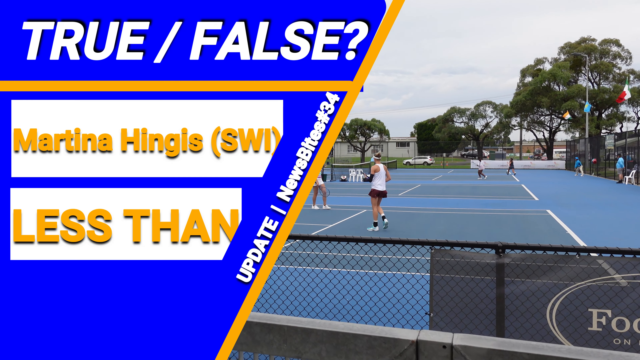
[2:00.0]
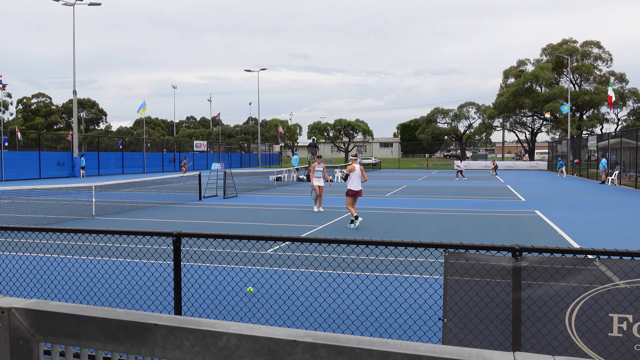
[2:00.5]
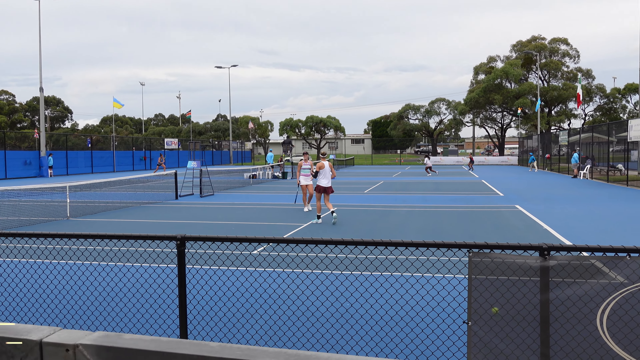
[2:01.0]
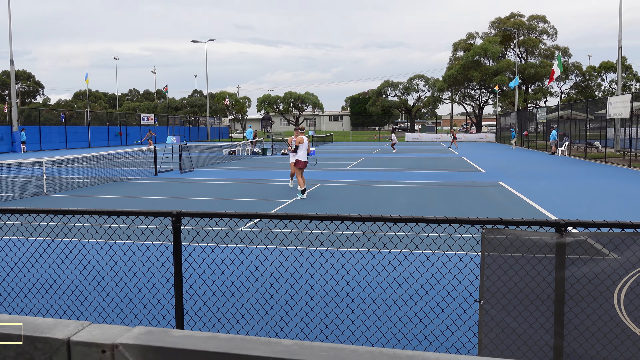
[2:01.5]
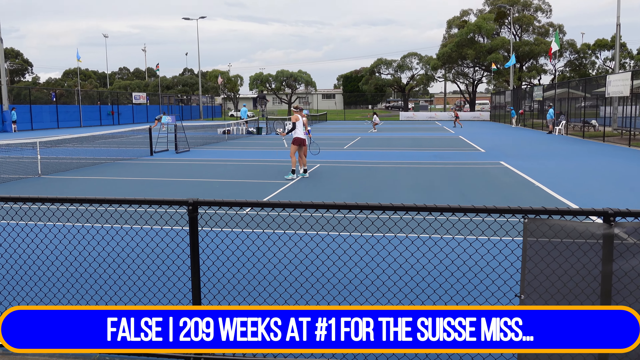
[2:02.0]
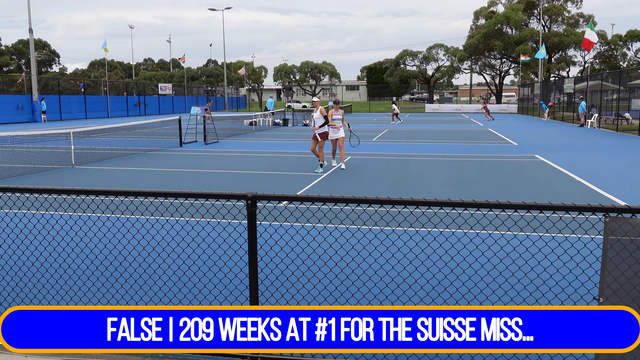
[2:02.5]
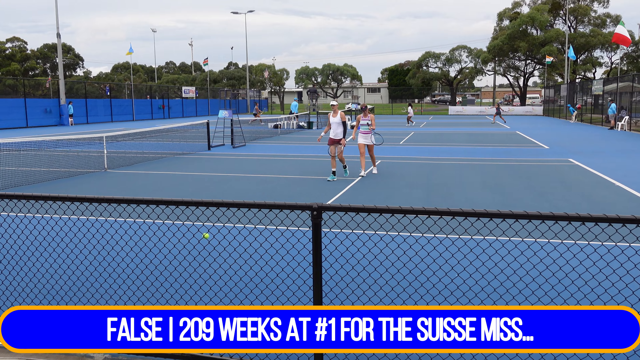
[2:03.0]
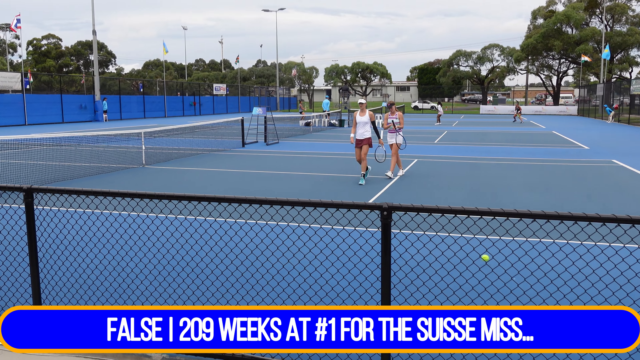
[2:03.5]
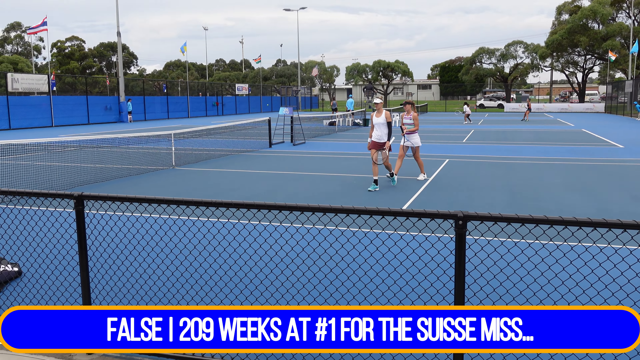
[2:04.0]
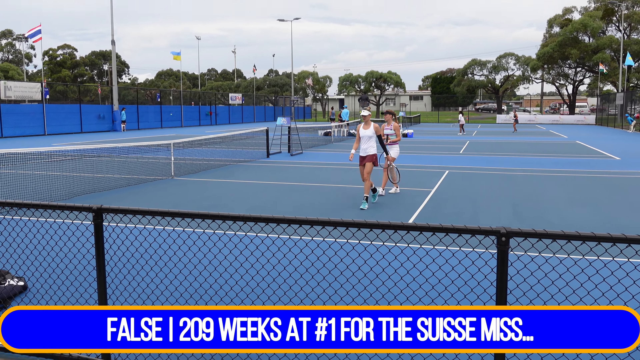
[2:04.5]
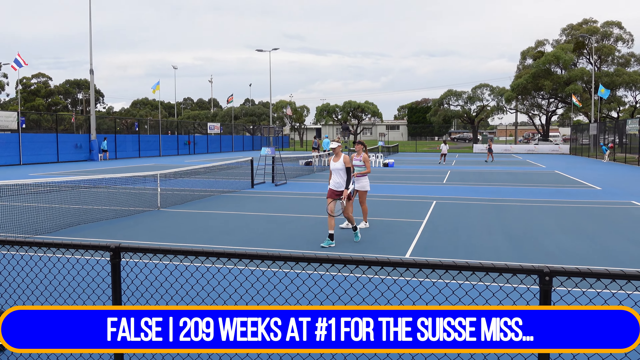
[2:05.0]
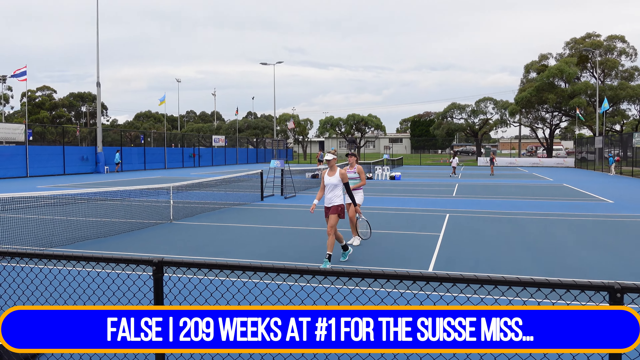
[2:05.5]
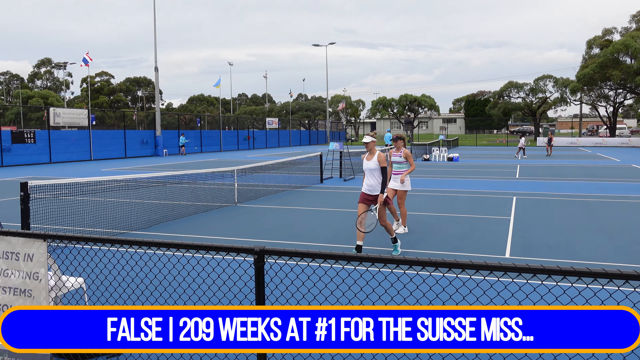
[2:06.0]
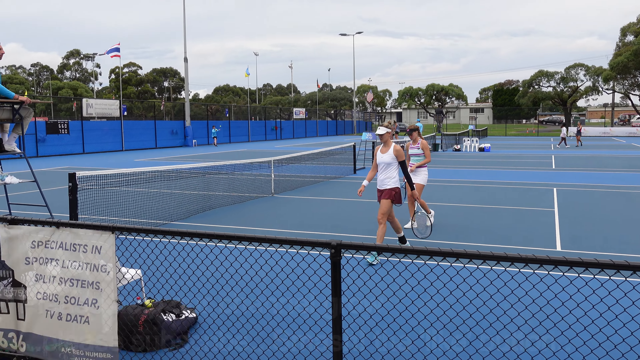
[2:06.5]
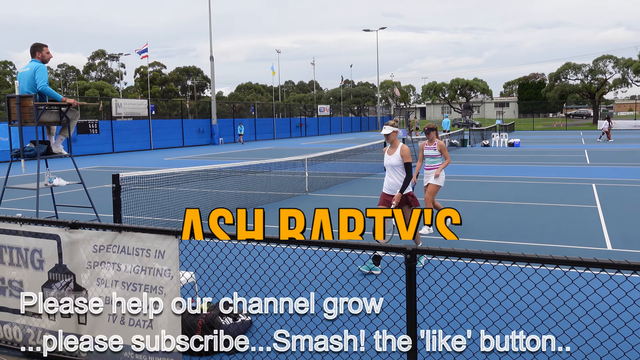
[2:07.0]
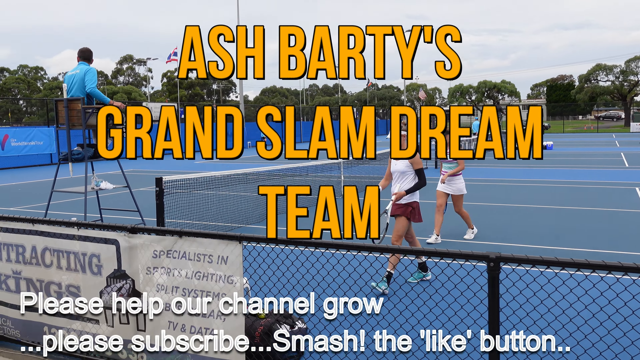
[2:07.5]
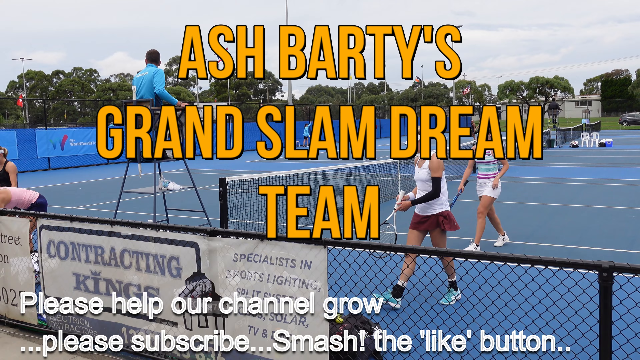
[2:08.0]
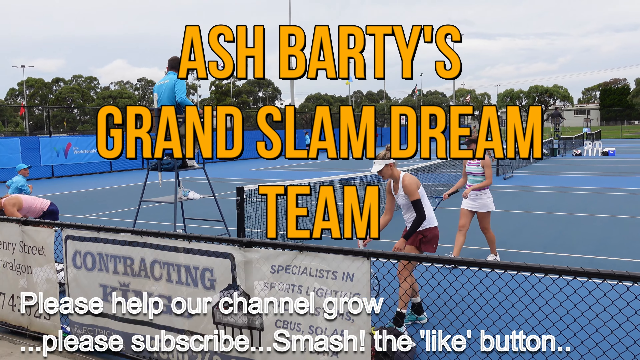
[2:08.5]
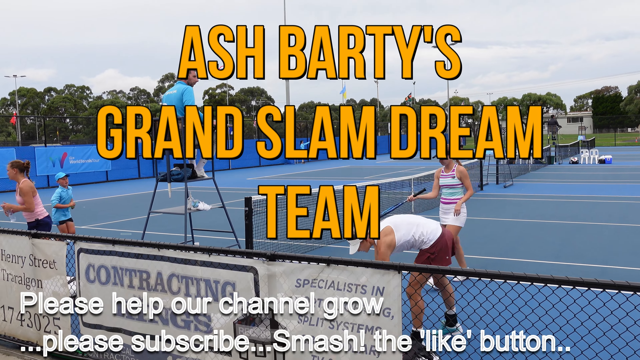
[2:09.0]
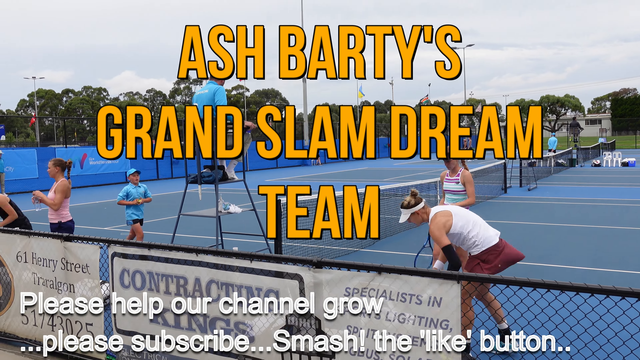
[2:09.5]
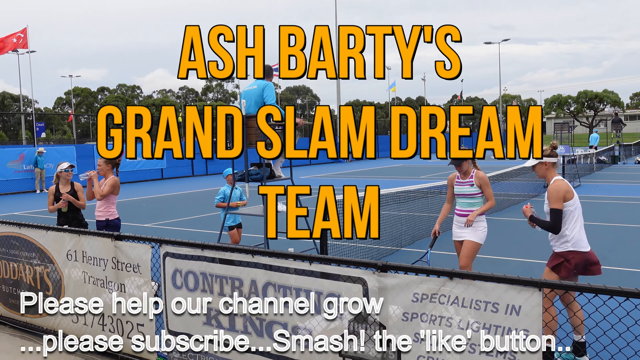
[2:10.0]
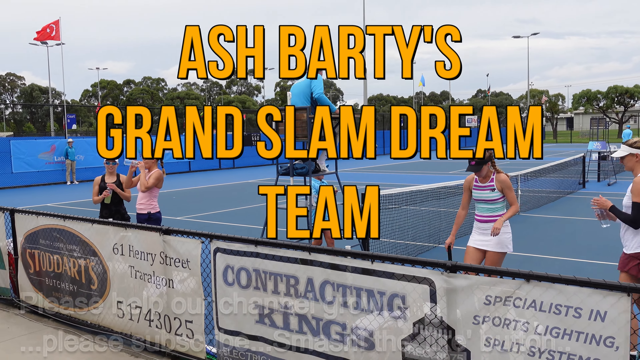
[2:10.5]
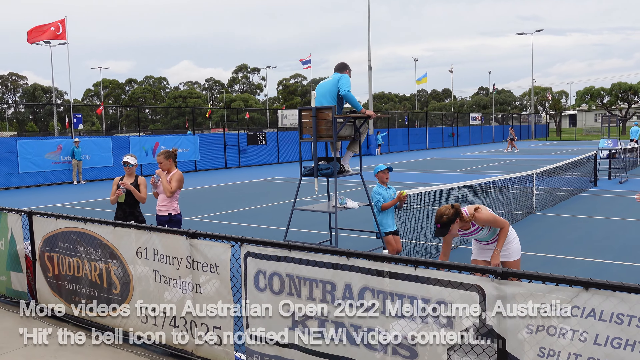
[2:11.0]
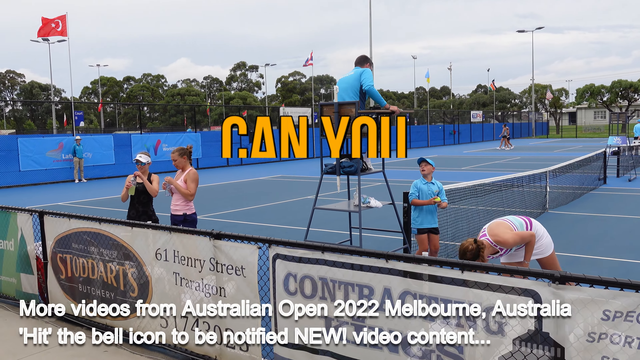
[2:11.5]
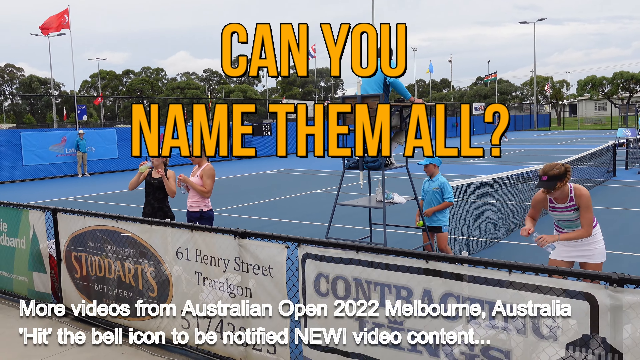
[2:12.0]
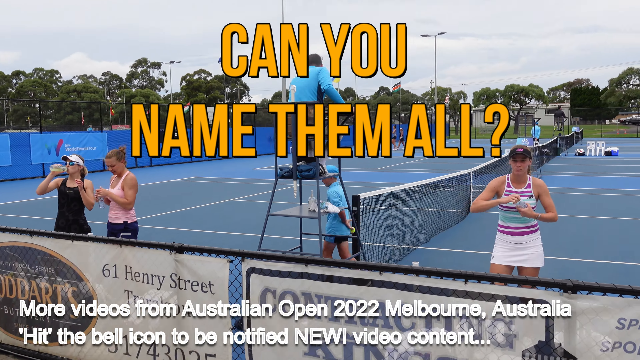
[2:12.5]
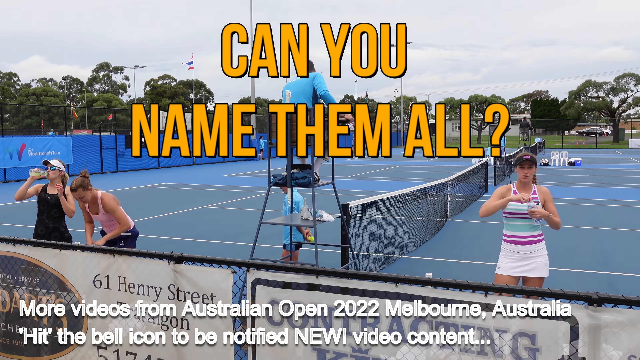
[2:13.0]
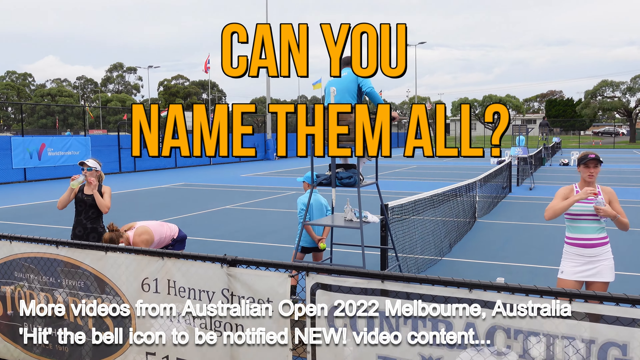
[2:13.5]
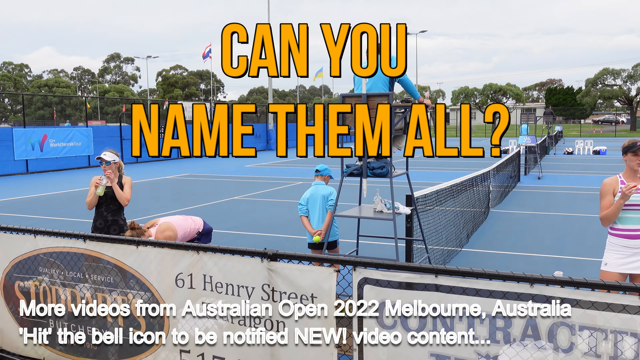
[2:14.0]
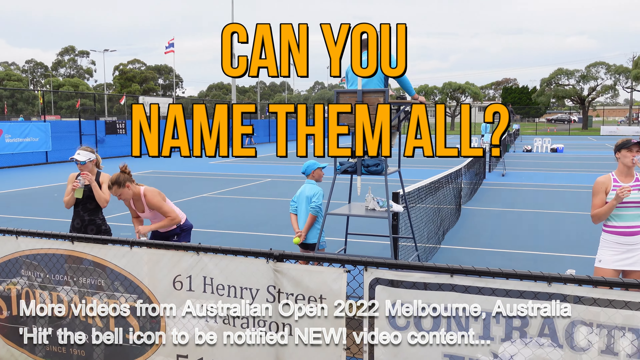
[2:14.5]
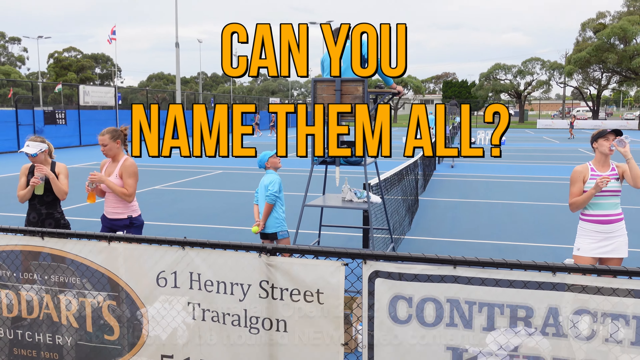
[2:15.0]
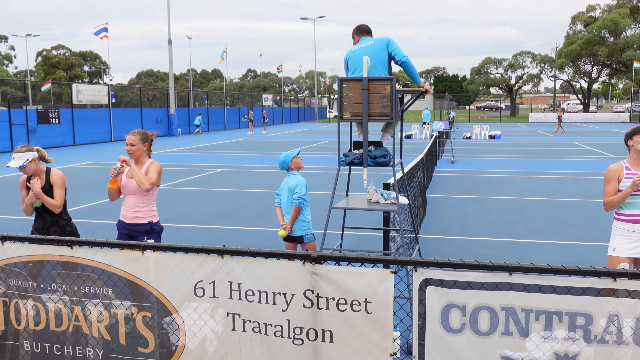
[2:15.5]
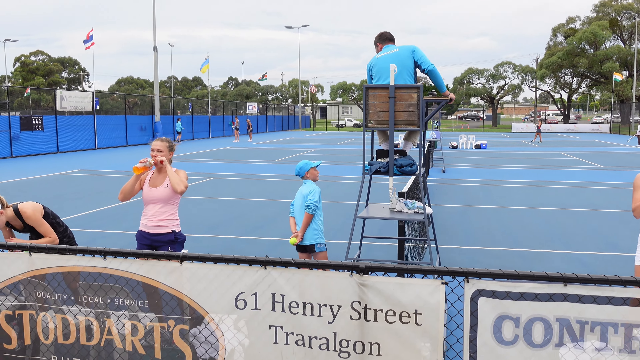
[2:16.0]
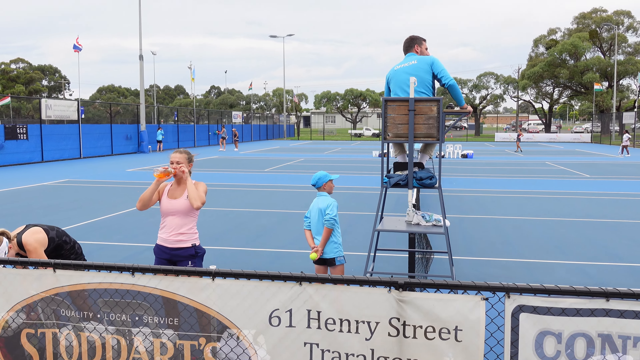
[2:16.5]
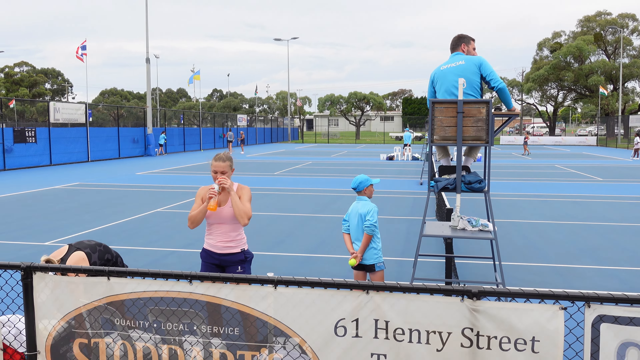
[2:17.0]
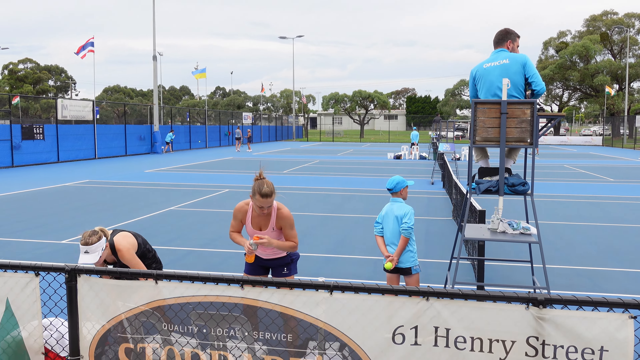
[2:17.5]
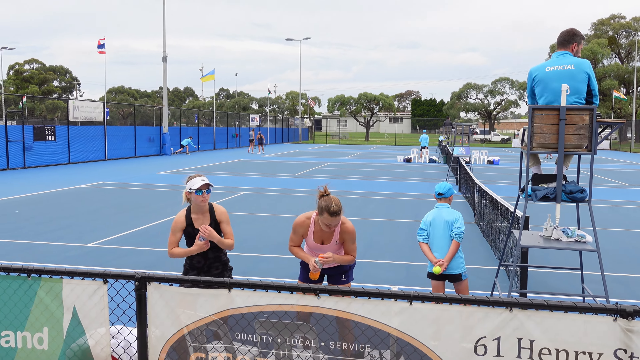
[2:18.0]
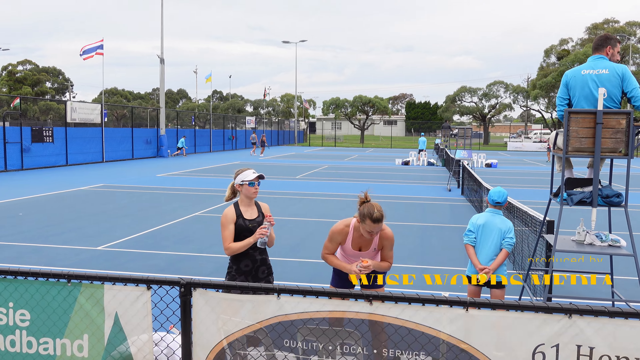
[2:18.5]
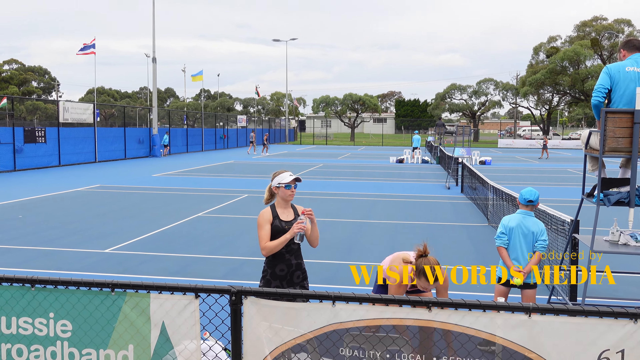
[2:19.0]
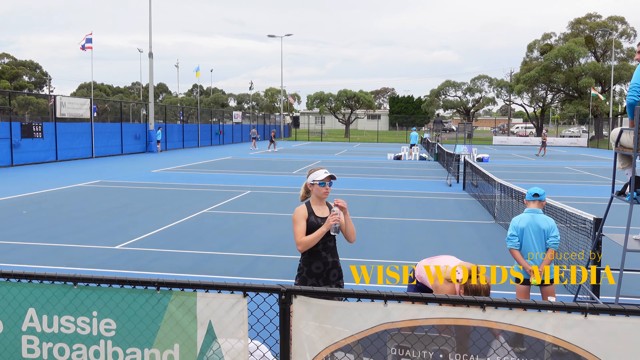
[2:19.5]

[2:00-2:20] Text on the left-hand side reads "True or false? Martina Hingis SWI less than", followed by the answer, beginning "False 209". Two women who have just finished a match walk away from the tennis court towards the corners. An umpire sits on a high chair. Text on the video reads "Please help our channel grow. Please subscribe smash the like button", and a bigger text reads "Ash Barty's Grand Slam dream team". A sign on the side of the fence reads "contracting Kings specialists and sports lighting", and another sign reads "61 Henry Street Tralagon"; some of these may be sponsors. The players take a water break. Text appears reading "Can you name them all?". A ball boy who looks young, maybe ten years old, is present. Text reads "Produced by wise words media". One of the fence ads has "Aussie life" on its corner, and there are many flags from different countries.